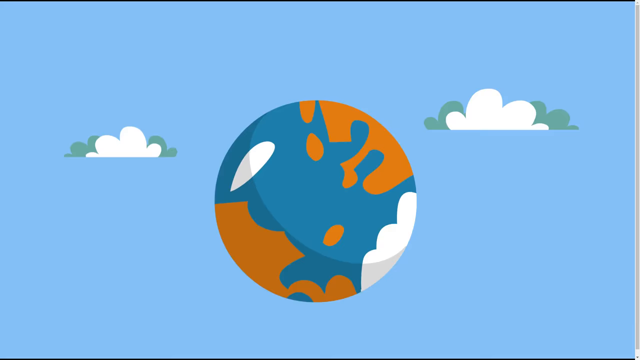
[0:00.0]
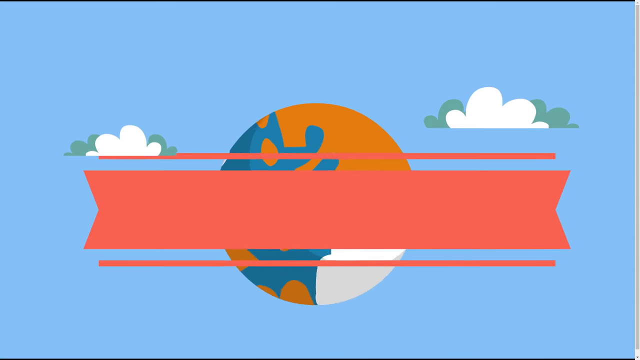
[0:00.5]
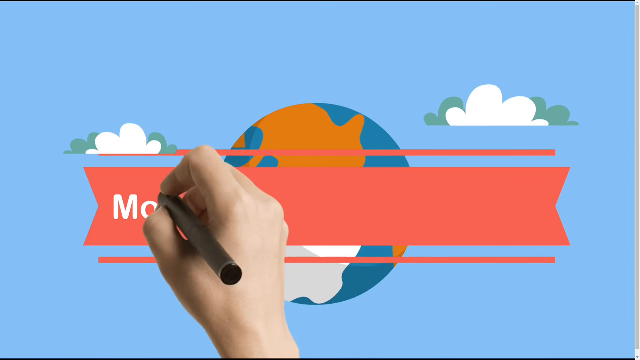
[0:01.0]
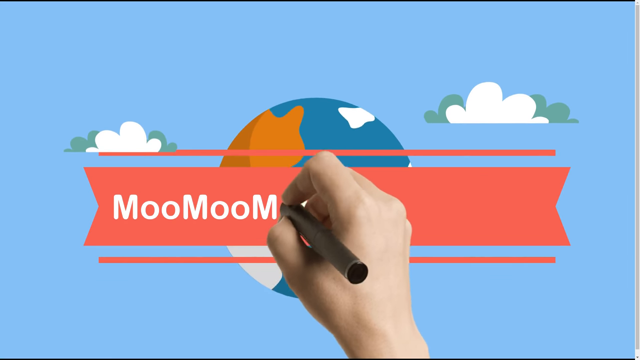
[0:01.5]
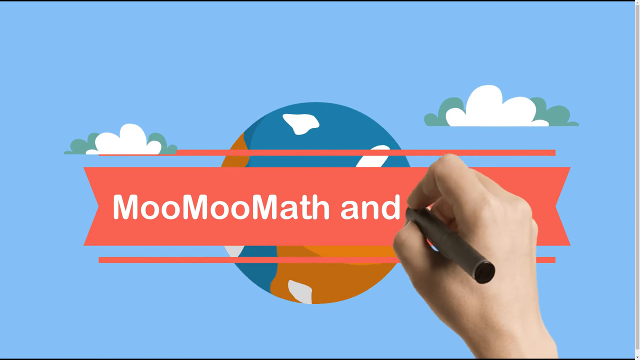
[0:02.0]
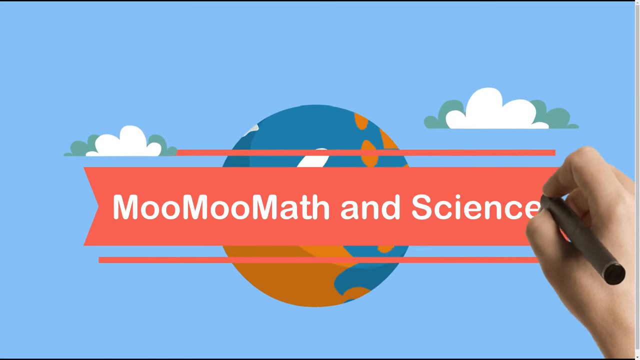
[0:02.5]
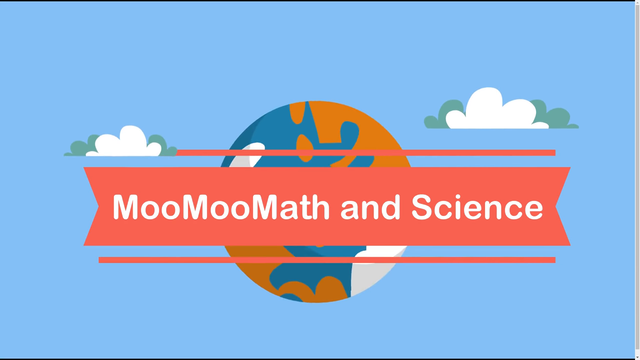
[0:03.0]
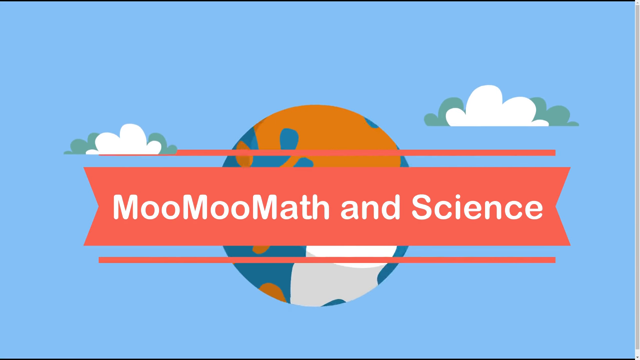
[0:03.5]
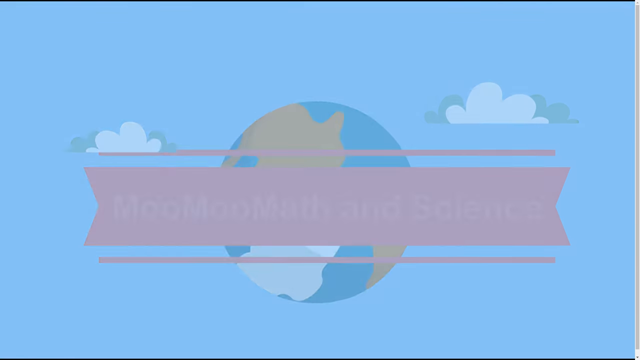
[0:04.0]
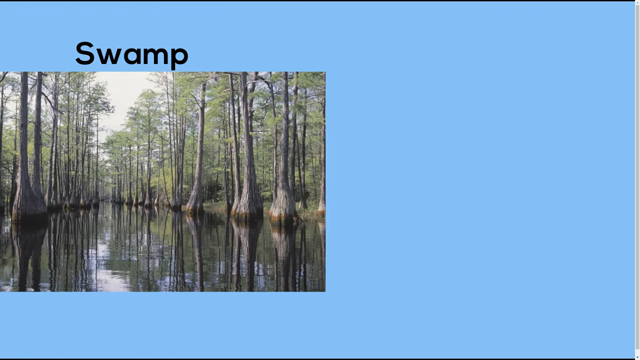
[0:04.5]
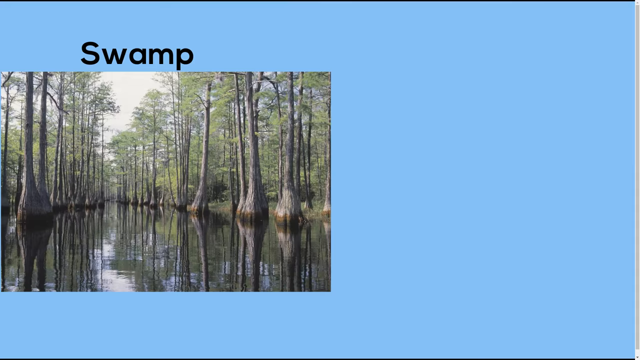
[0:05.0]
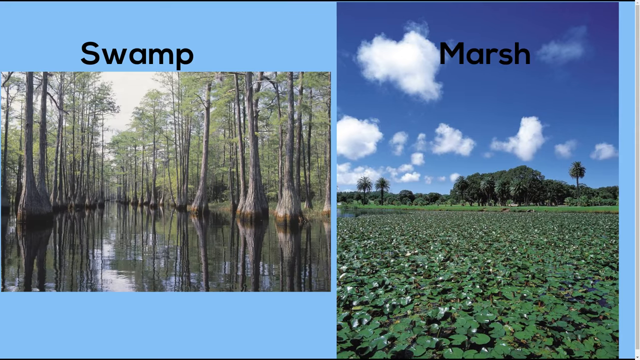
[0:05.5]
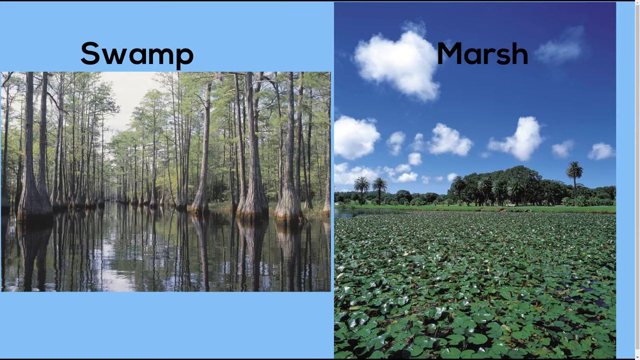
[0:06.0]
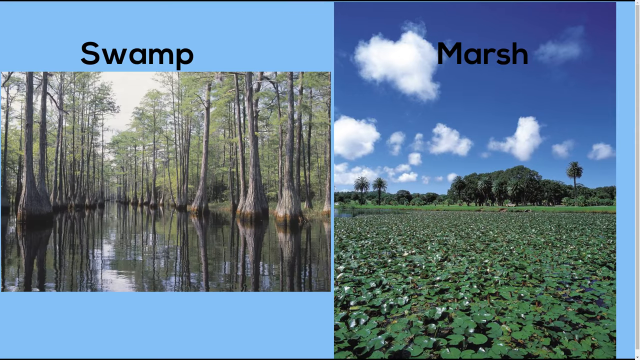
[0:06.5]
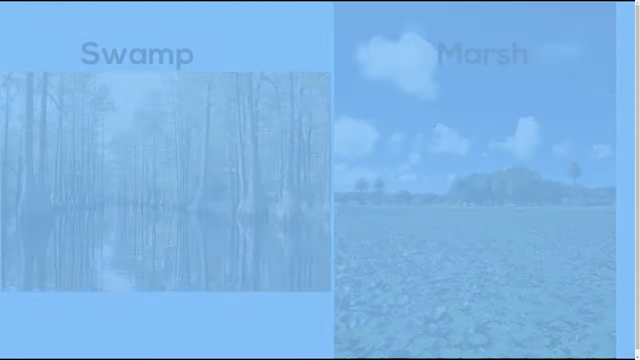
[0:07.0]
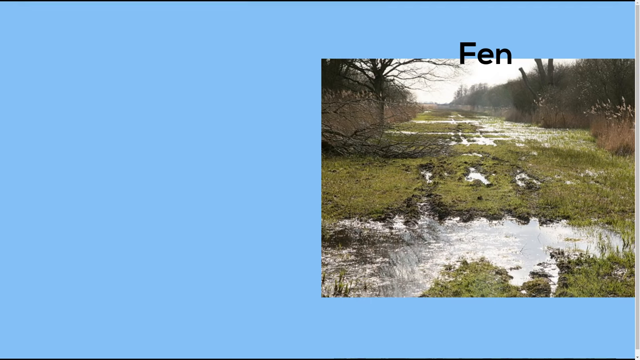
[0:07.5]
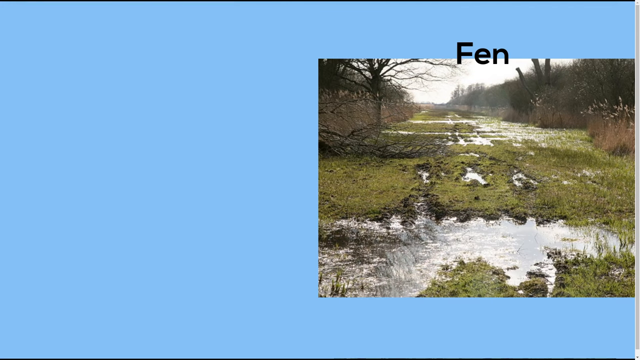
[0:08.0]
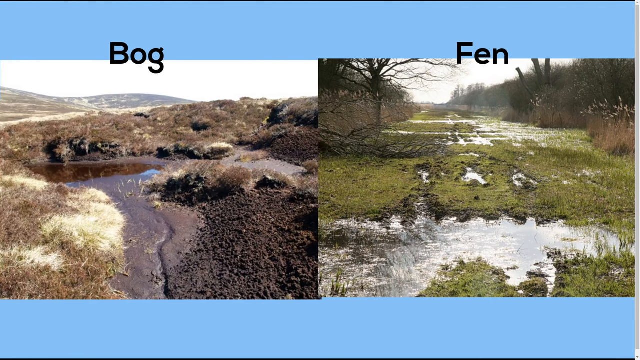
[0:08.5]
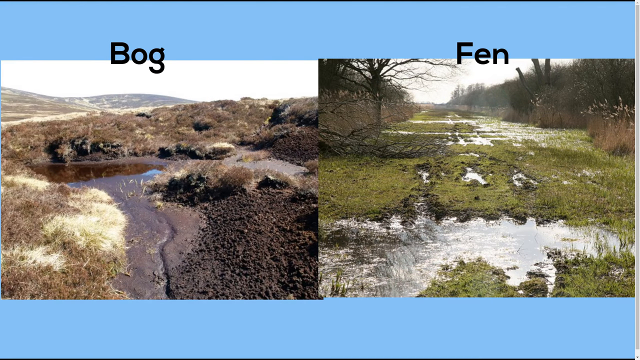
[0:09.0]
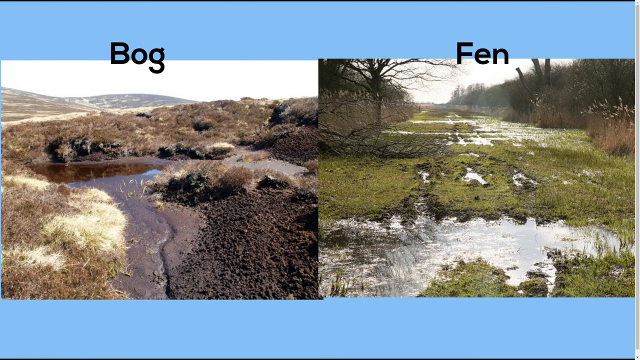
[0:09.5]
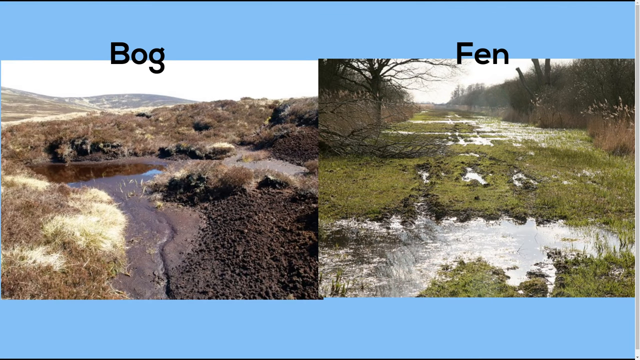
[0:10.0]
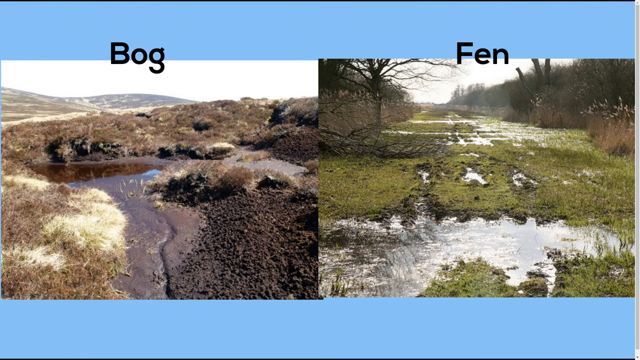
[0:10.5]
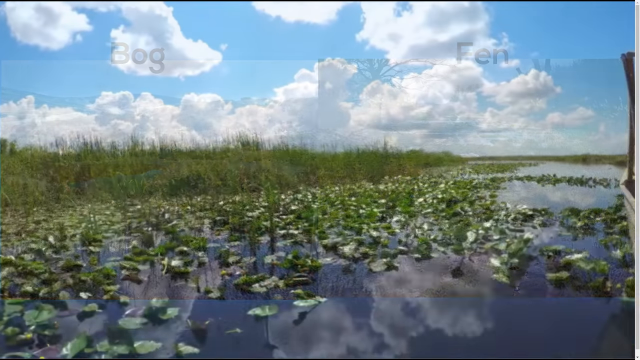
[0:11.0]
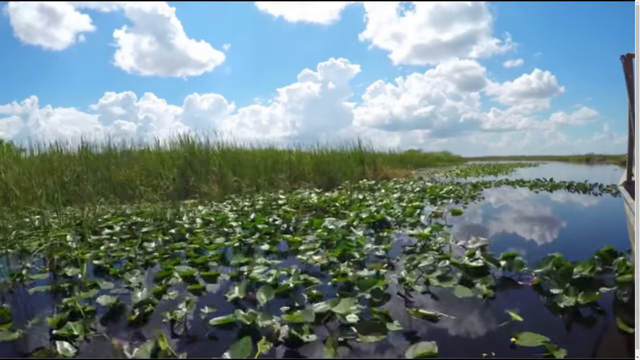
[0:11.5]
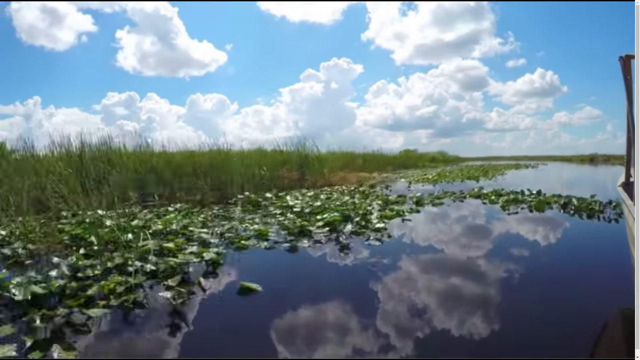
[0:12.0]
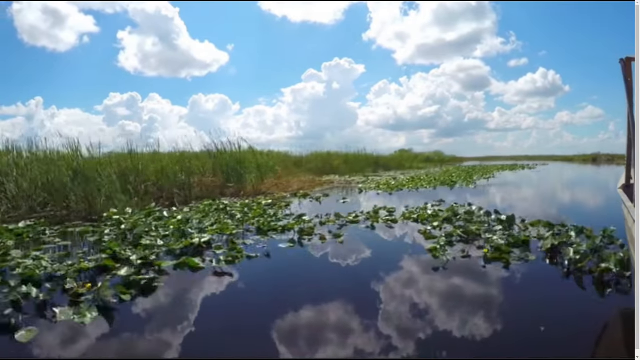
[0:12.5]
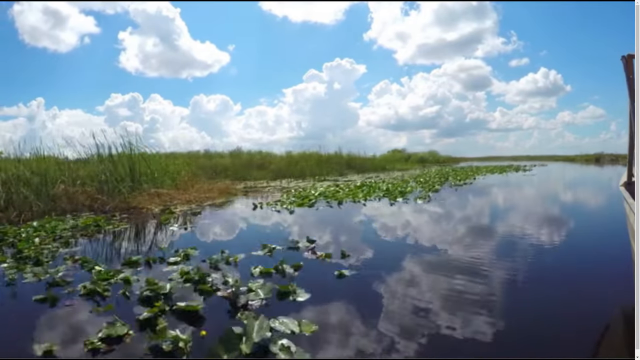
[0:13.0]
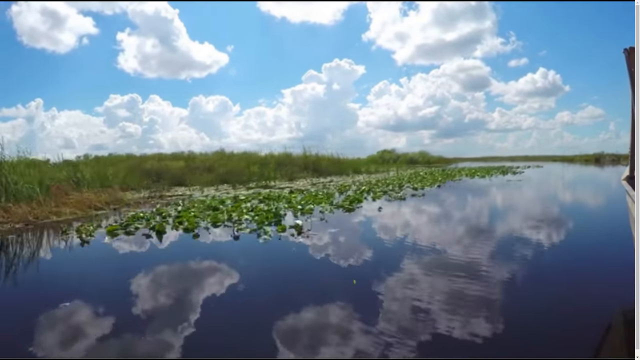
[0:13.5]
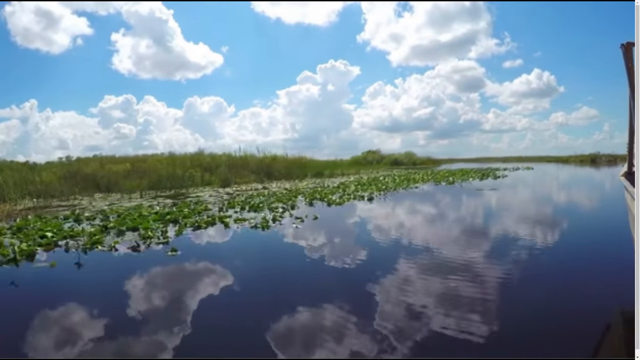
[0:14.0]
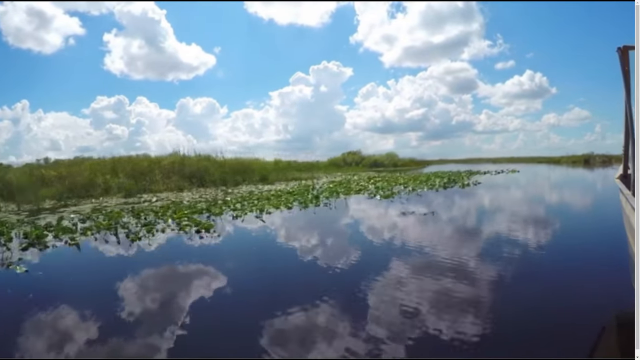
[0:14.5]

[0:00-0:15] This appears to be an educational video, with scenes for swamp, marshes, fen, and bogs. The beginning seems to carry the title Moomoo Math & Science, with a spinning globe behind it as the logo. Pictures depict each type of land: bogs, fens, swamps, and marshes. A cloudy background with a blue sky is present for most of the footage. Toward the end, the person with the camera appears to be sitting inside a boat that is traveling, probably downriver or downstream.